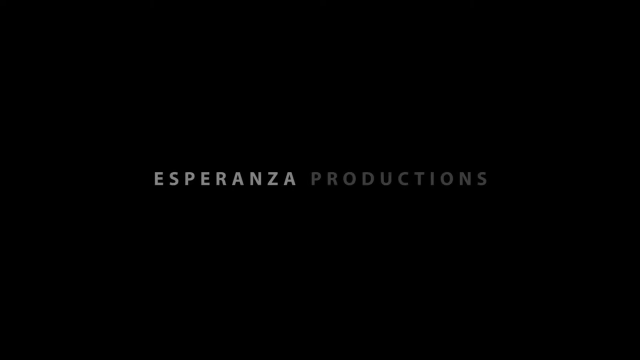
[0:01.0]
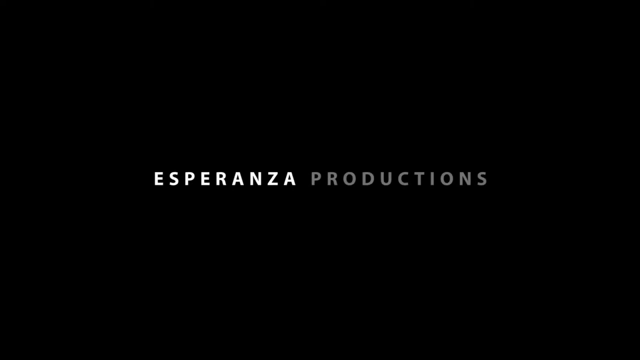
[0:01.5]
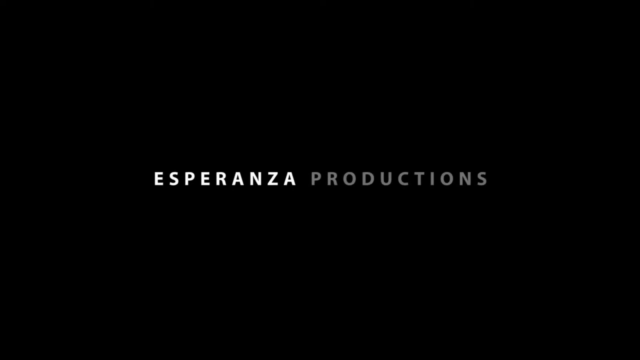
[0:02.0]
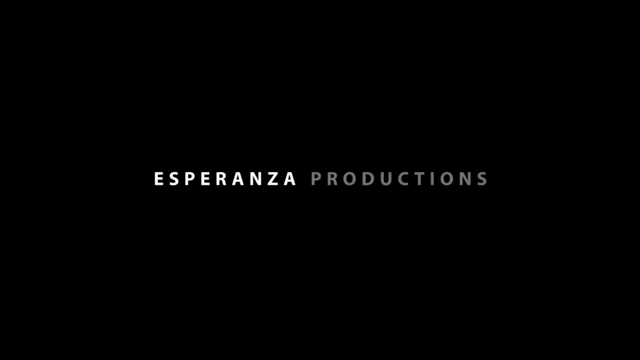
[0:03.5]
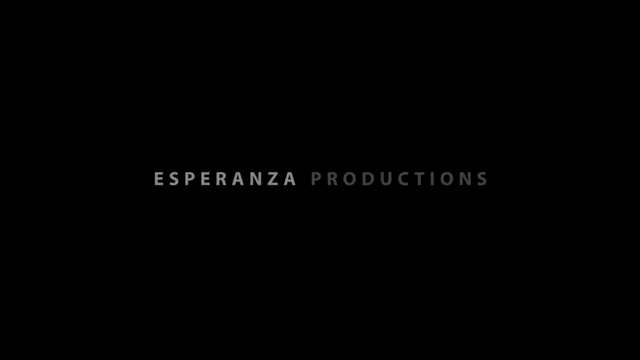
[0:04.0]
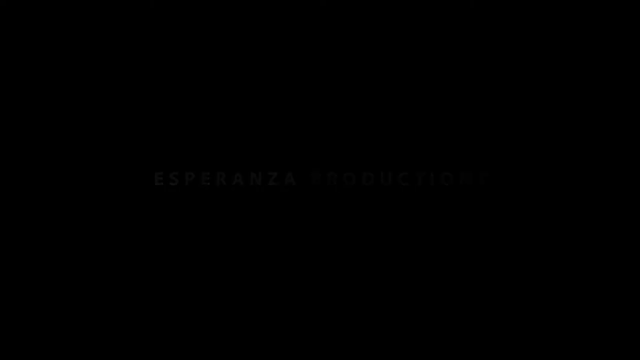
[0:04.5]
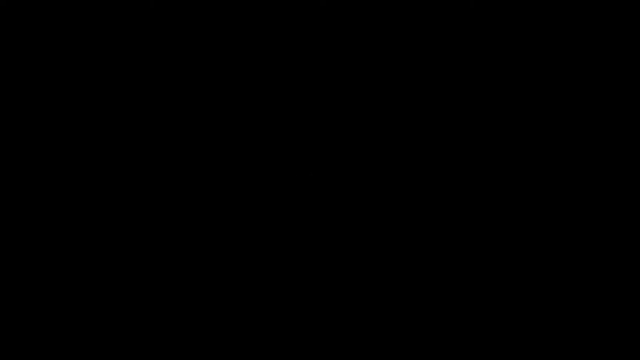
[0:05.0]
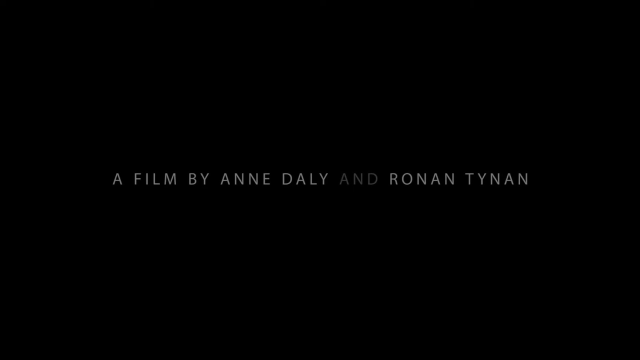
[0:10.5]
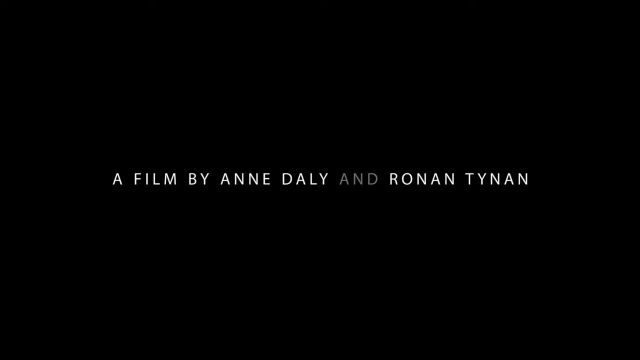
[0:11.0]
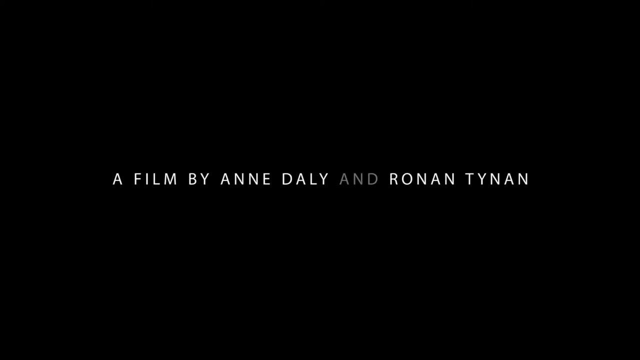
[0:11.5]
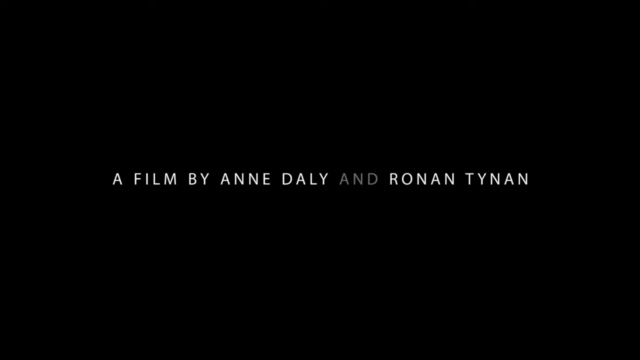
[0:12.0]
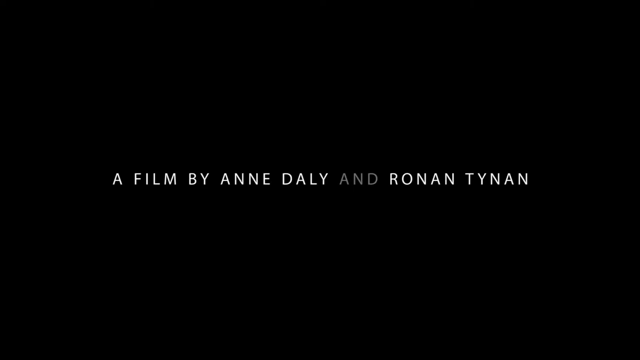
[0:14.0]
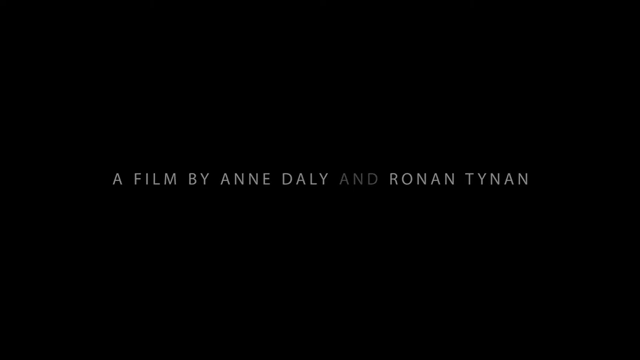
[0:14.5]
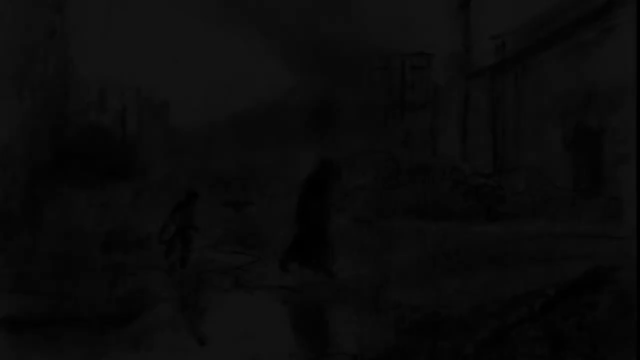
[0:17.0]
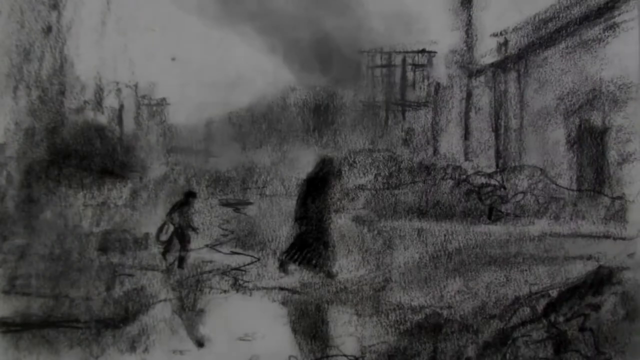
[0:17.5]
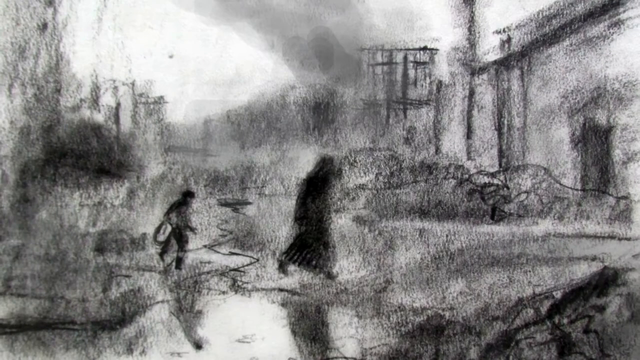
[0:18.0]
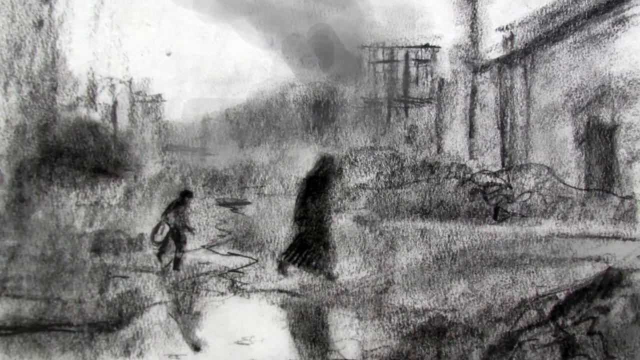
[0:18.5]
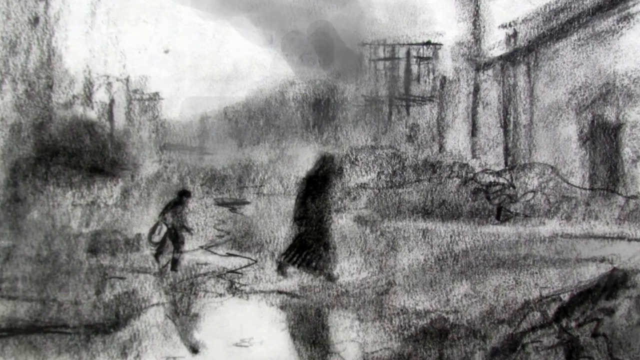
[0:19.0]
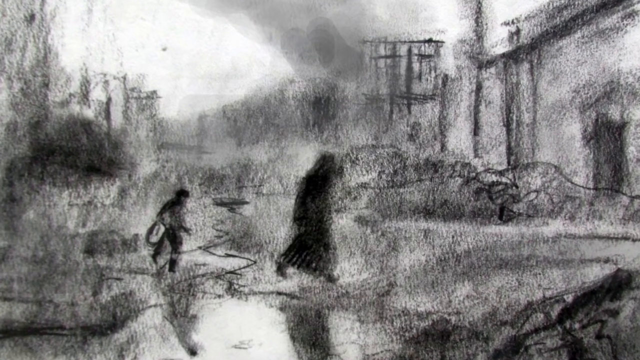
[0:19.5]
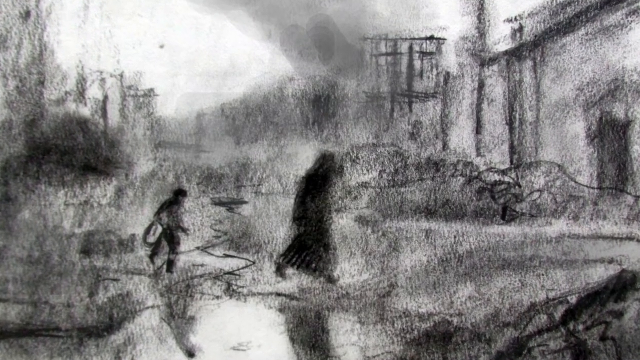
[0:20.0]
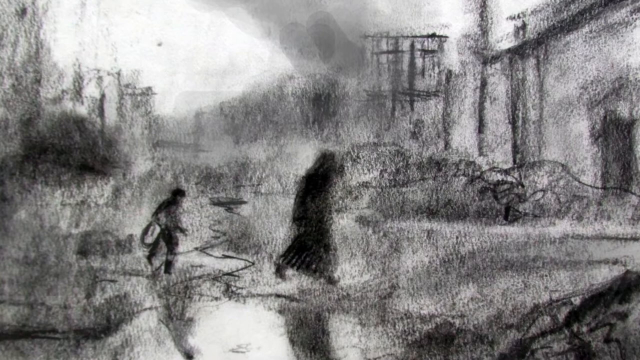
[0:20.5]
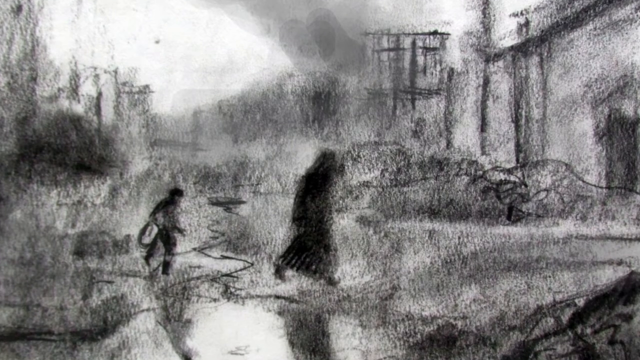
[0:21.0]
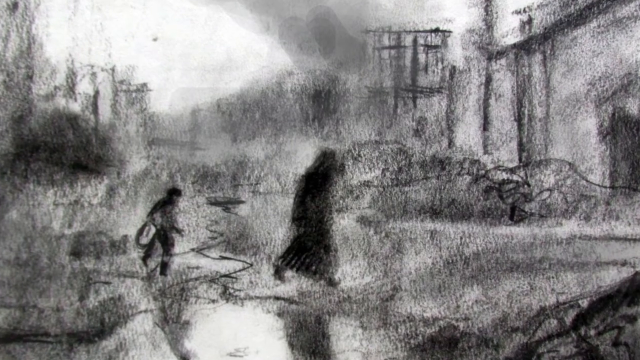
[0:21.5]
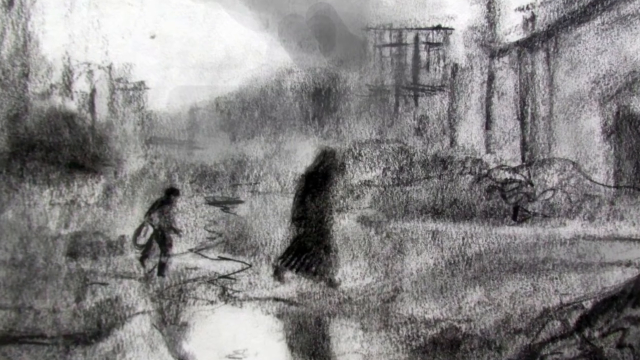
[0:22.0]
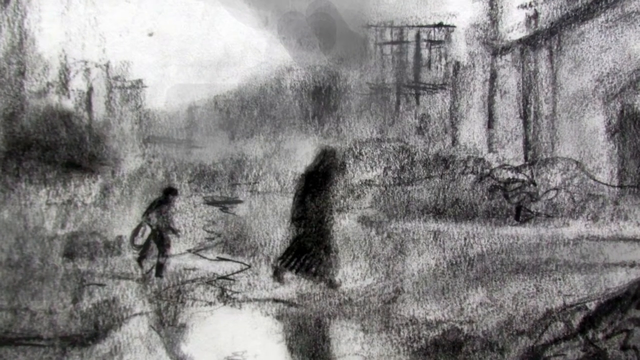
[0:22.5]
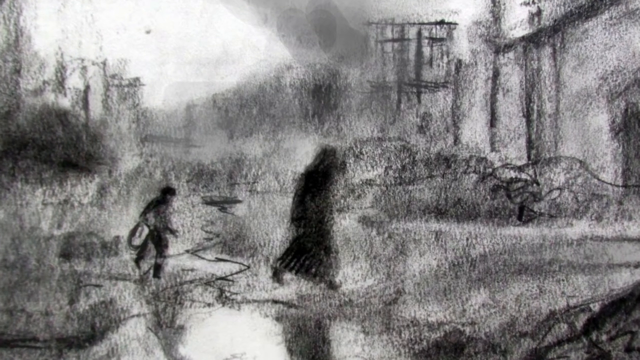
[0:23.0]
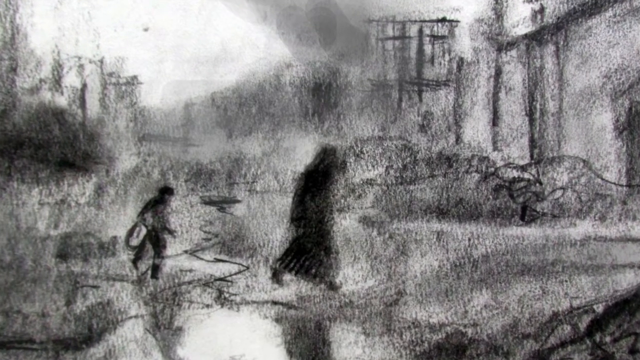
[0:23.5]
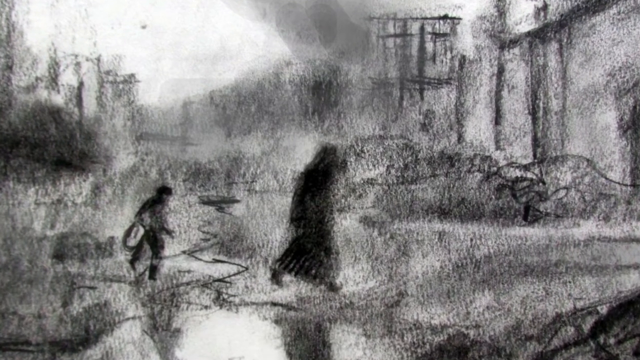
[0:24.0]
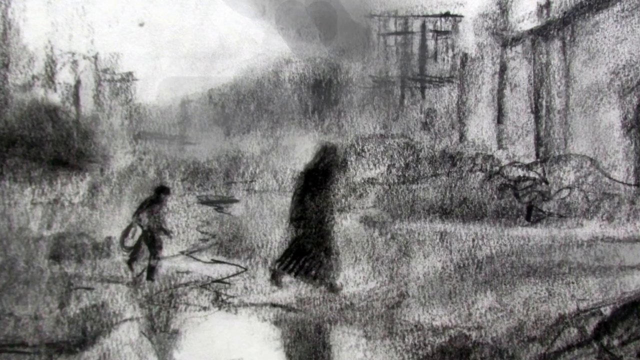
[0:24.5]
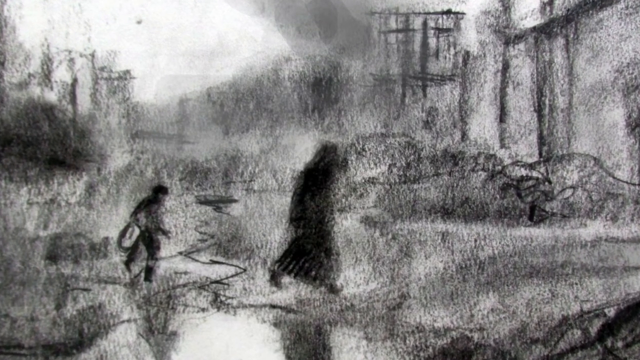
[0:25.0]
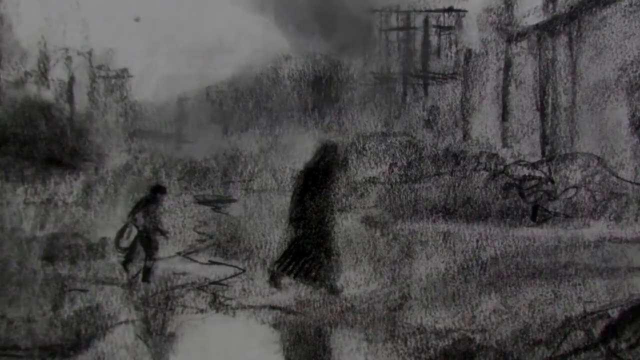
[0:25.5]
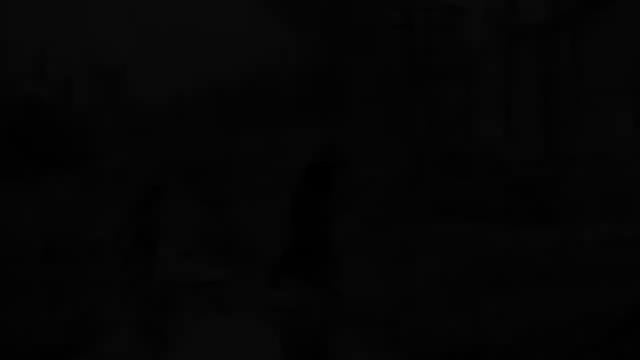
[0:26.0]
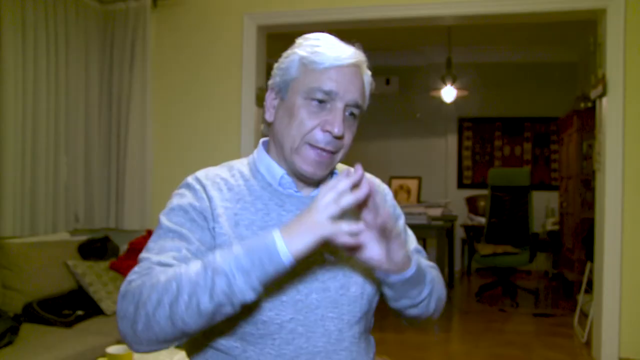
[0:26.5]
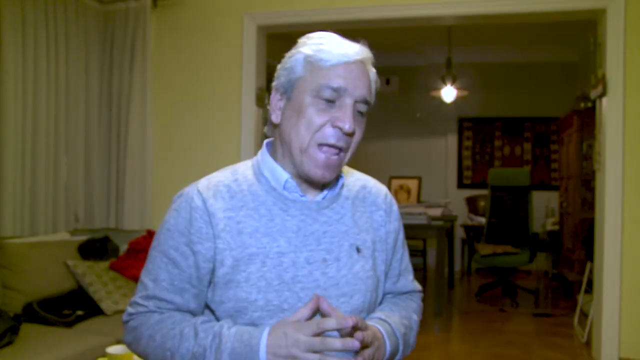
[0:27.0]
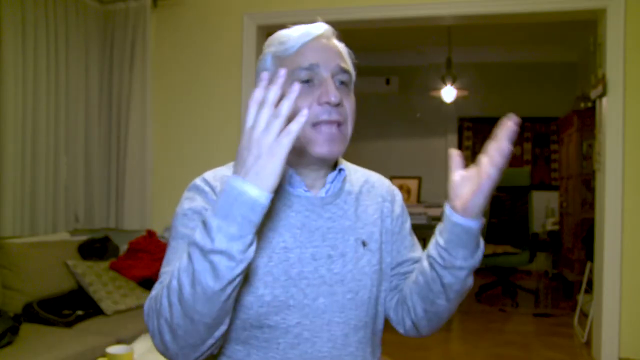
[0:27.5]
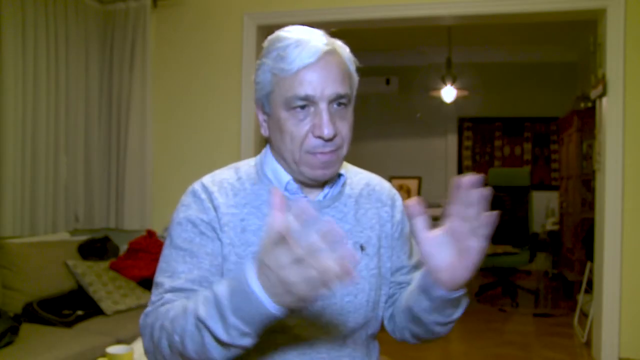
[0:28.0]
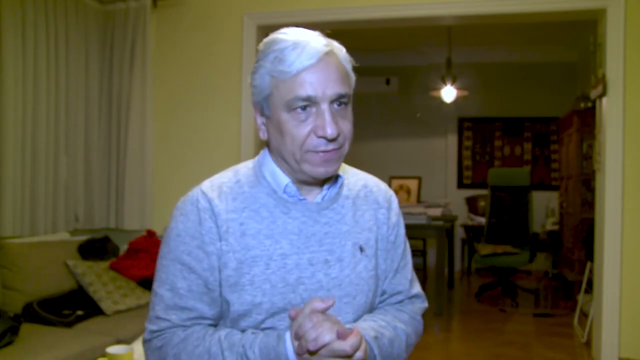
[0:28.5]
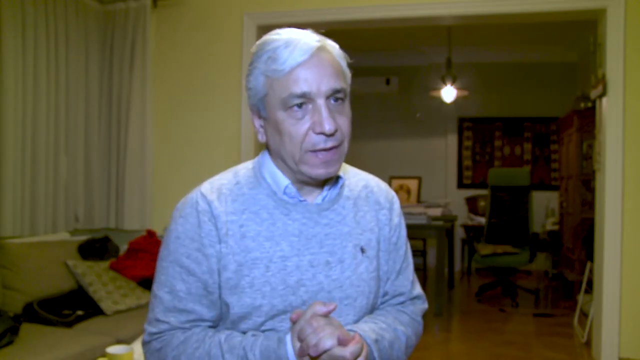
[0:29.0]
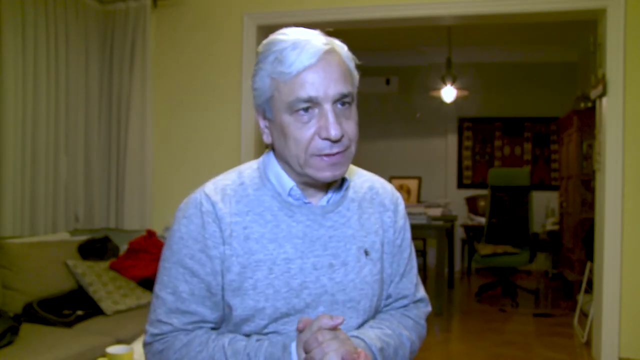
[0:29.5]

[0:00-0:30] The video looks like an animation. On a cold, snowy day there is a building, and a mother wearing a long gown walks in front, followed by a child. A man with white hair, wearing a powder blue polo jersey, sits on a chair; he seems to be being interviewed and answering questions about what is happening in the video. The video was filmed by Anne Daly and Ronan Tyen.